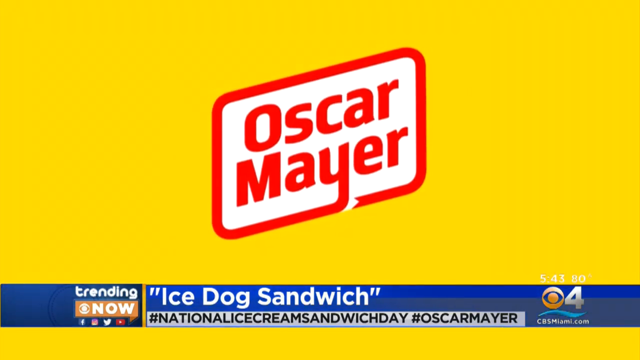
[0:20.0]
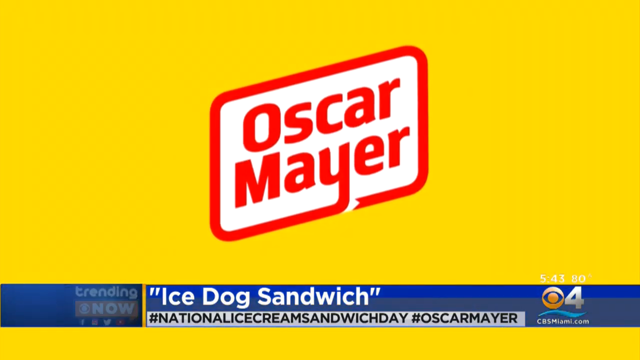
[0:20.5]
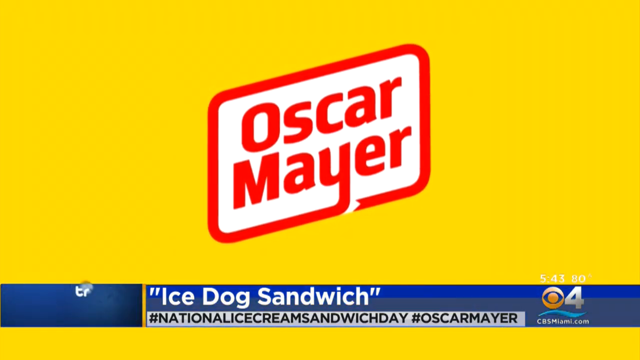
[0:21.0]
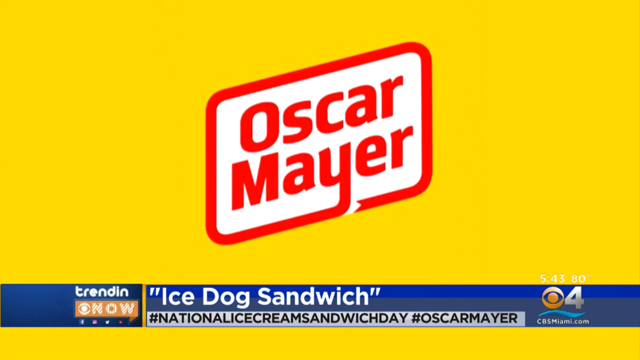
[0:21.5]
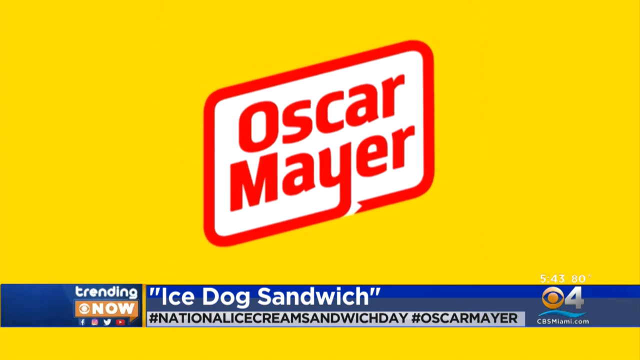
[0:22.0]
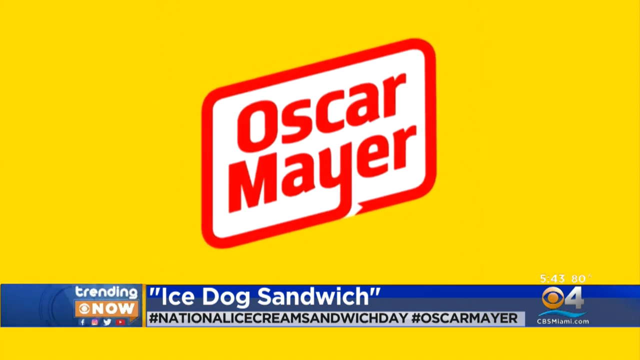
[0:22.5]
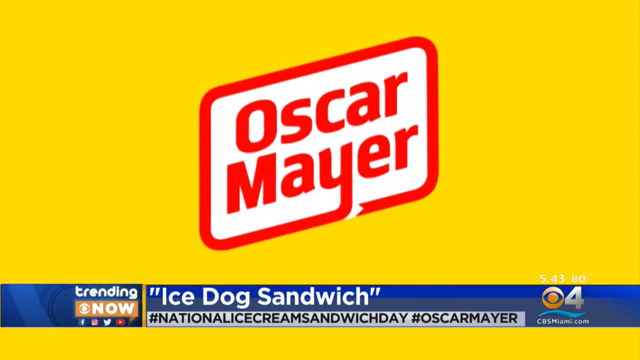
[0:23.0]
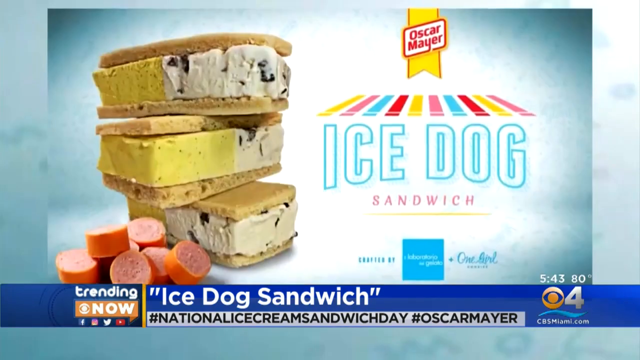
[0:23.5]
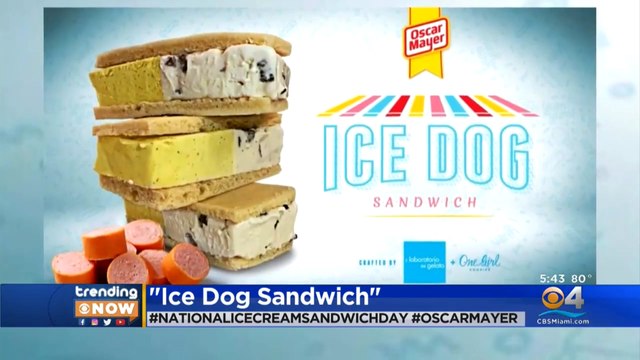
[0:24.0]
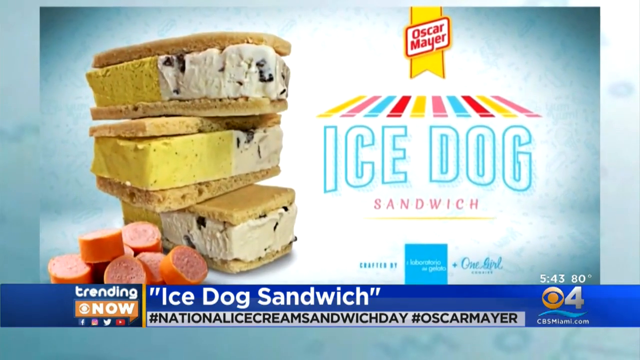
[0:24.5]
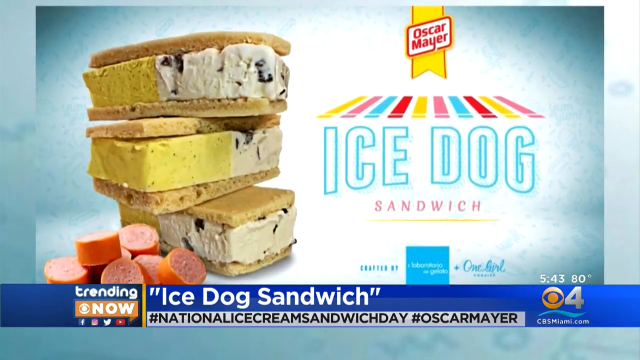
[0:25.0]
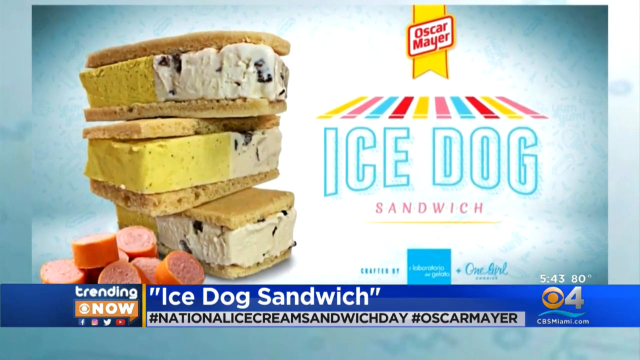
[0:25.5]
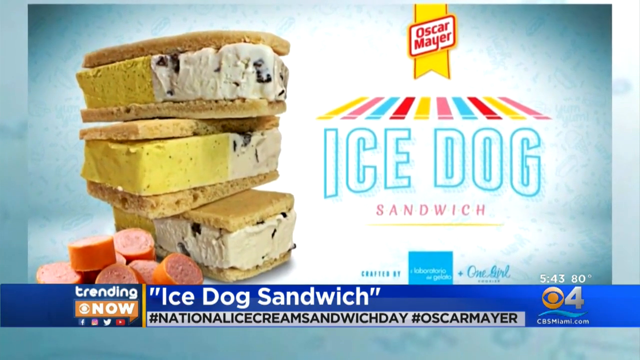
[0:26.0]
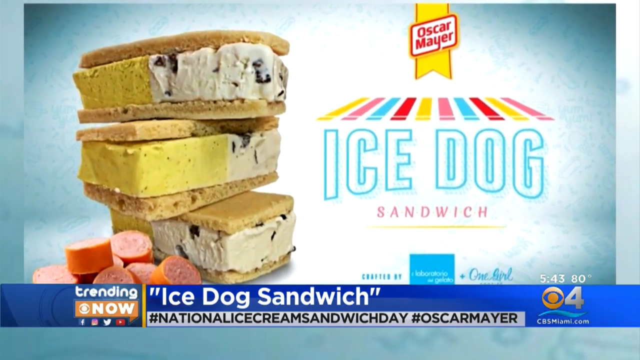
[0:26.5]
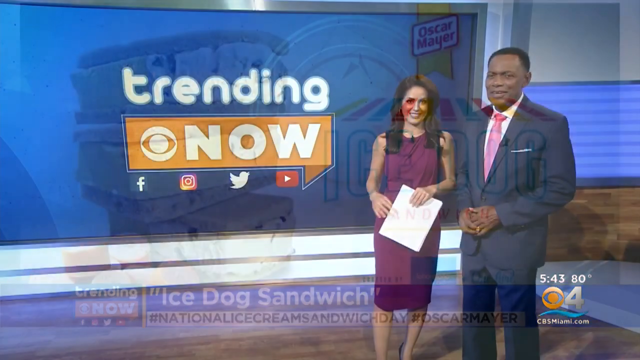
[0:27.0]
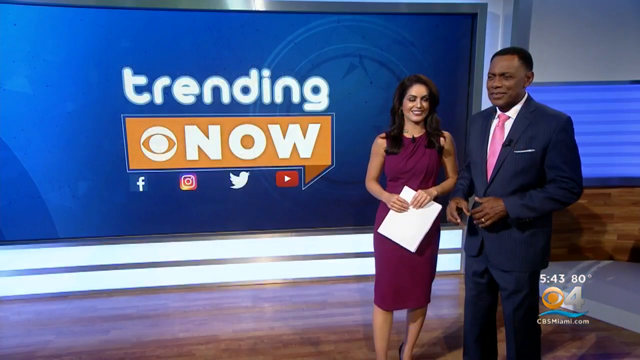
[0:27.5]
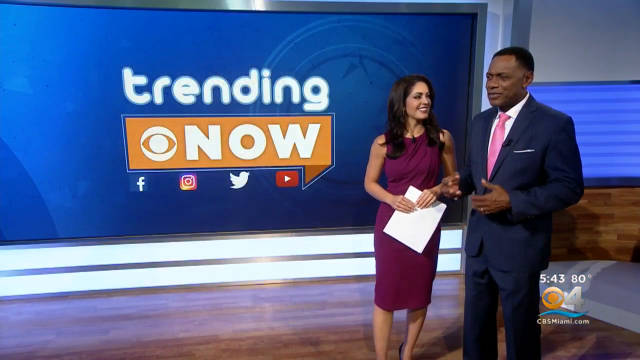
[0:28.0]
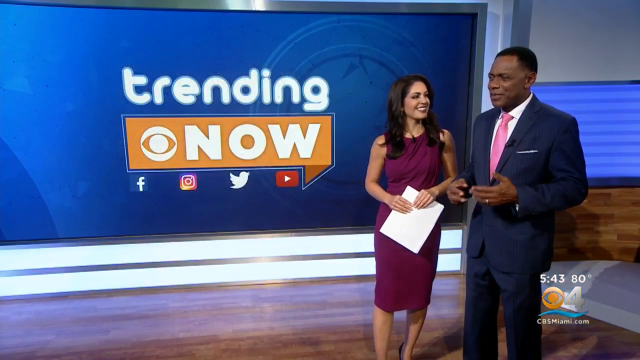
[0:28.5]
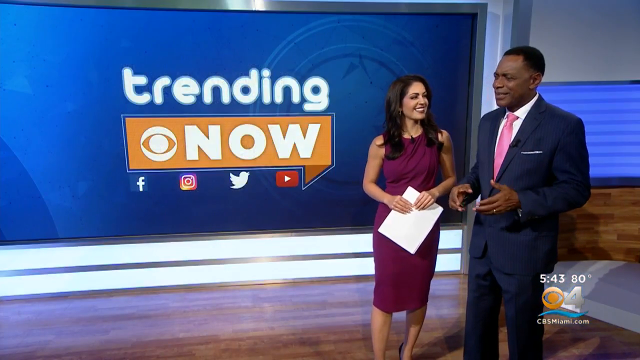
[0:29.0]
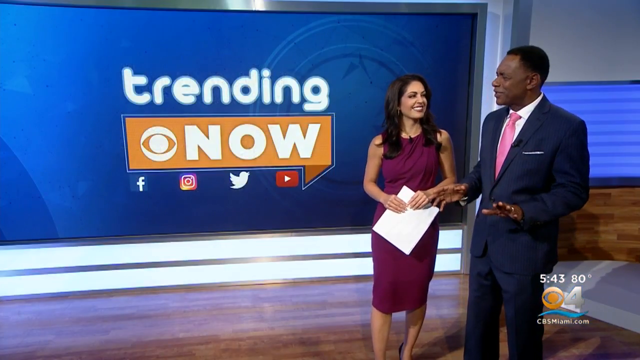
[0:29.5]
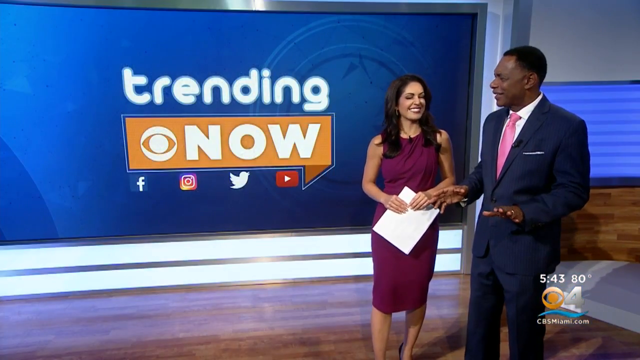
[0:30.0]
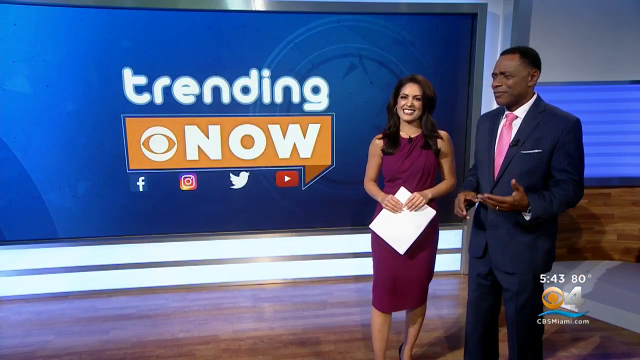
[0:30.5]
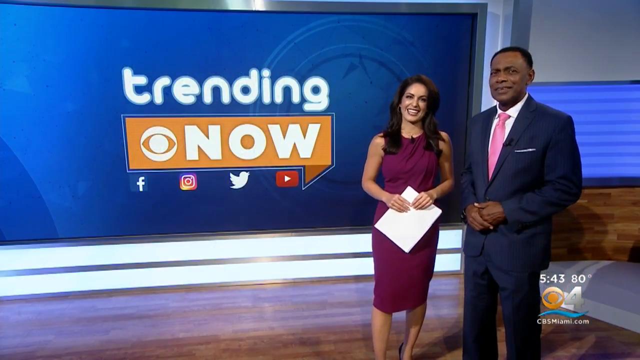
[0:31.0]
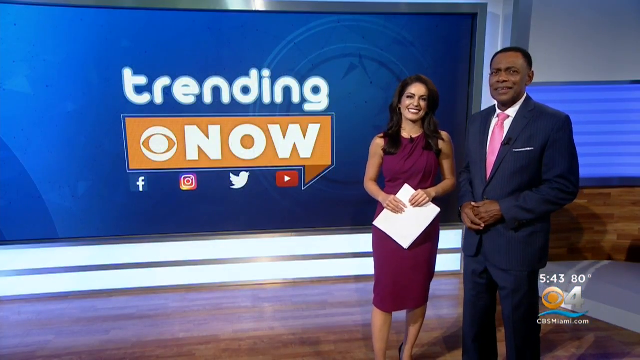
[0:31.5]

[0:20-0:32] The Oscar Mayer logo fills the focus, its words in red font on a white background. A news title heading reads "Ice Dock Sandwich, International Ice Cream and Sandwich Day, Oscar Mayer." The video transitions to a page showing Ice Dock Sandwiches by the brand Oscar Mayer, which are ice cream between biscuits. It then transitions to two newscasters discussing the story: a Black man, presumably in his 50s, wearing a full navy suit with a white t-shirt underneath, and a woman presumably in her late 30s to early 40s. The man makes hand gestures as he gives his opinion on the sandwich, while the woman smiles at the audience and looks at him from time to time. The broadcast is on the American channel CBS 4.